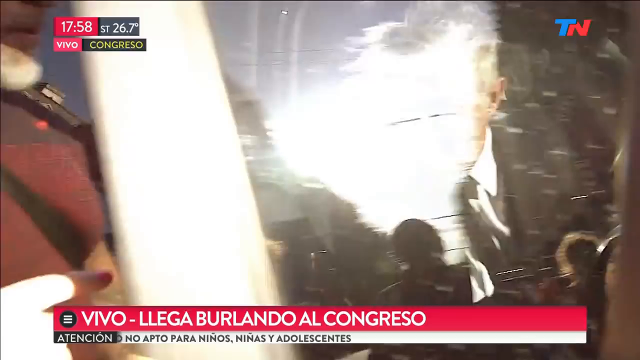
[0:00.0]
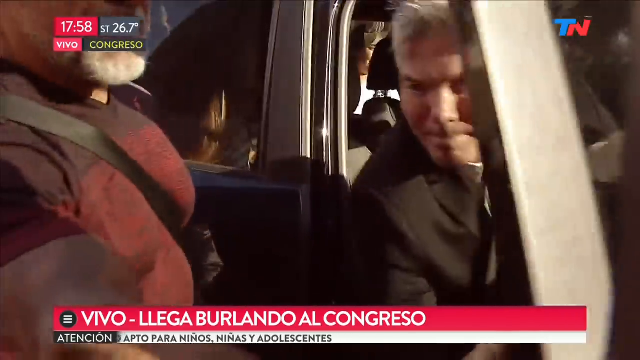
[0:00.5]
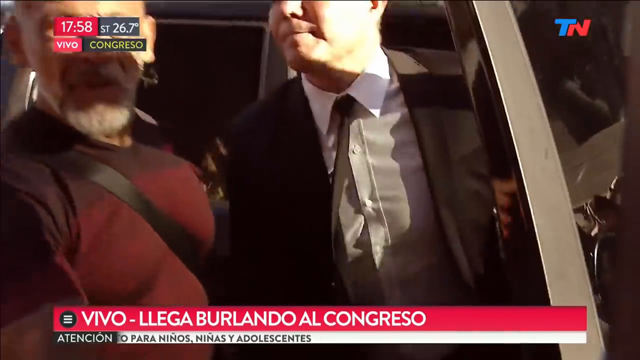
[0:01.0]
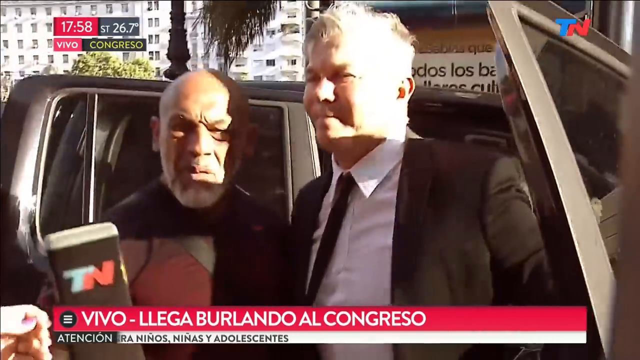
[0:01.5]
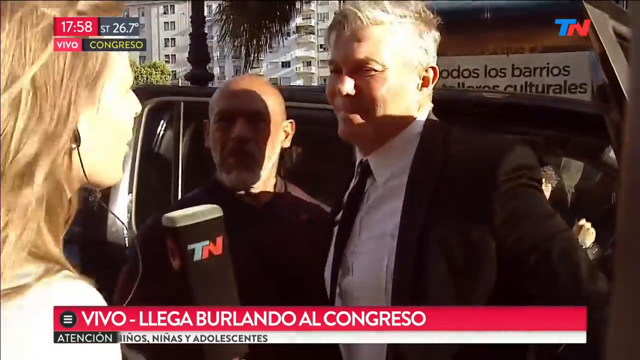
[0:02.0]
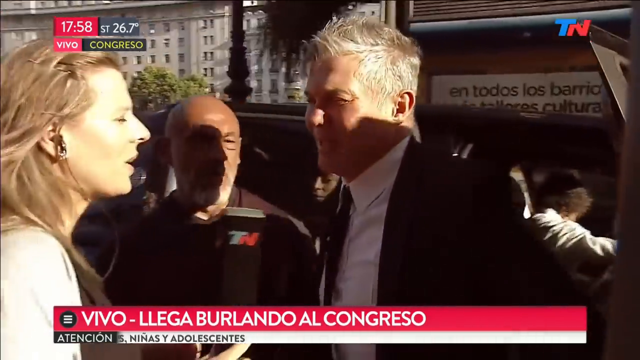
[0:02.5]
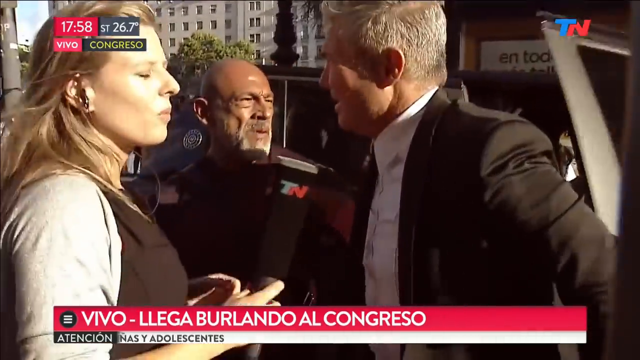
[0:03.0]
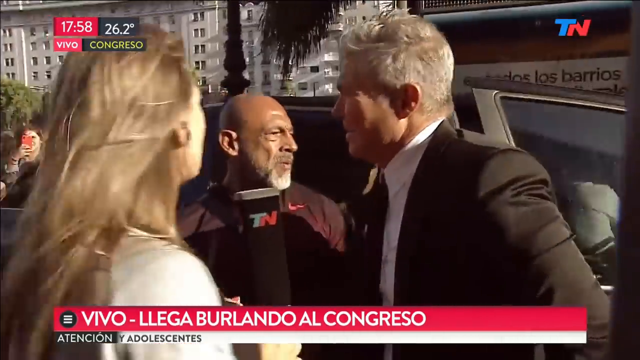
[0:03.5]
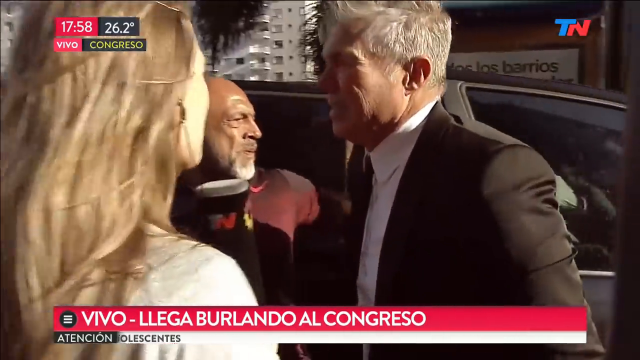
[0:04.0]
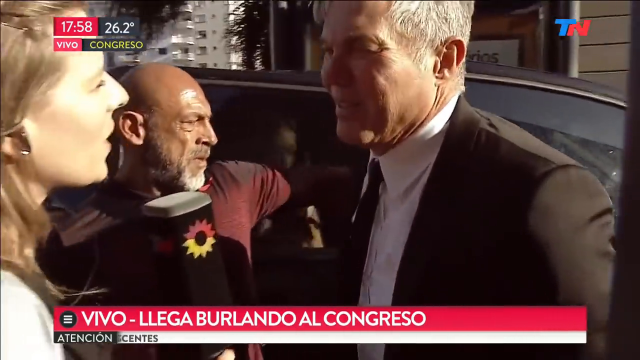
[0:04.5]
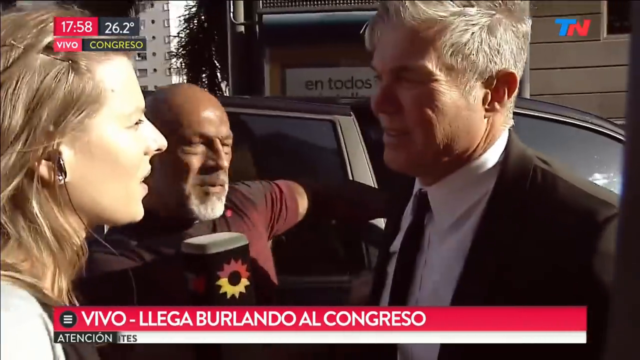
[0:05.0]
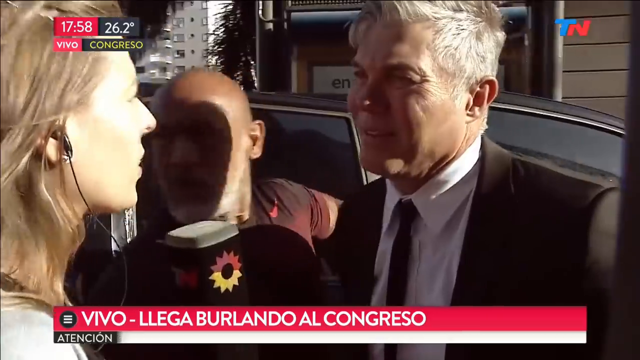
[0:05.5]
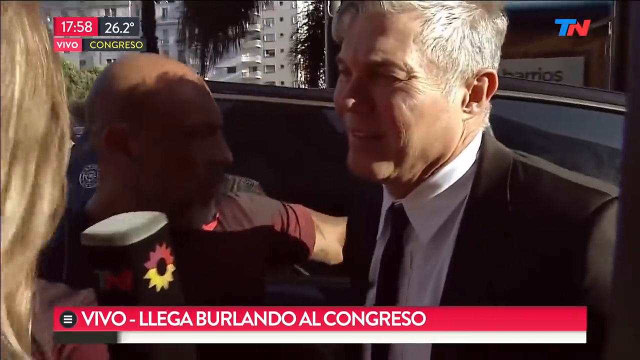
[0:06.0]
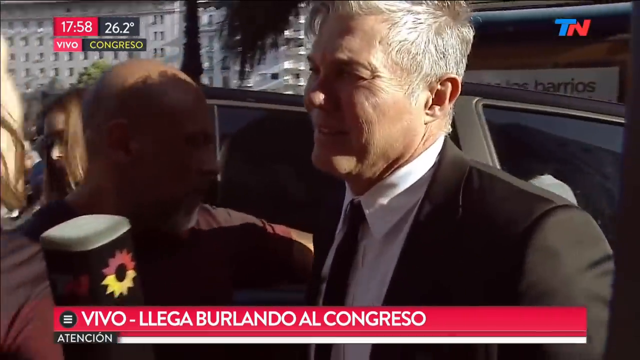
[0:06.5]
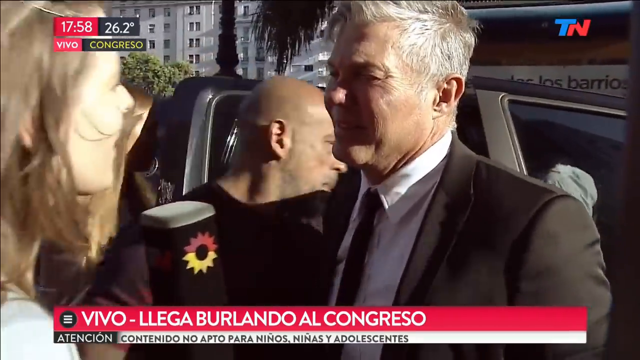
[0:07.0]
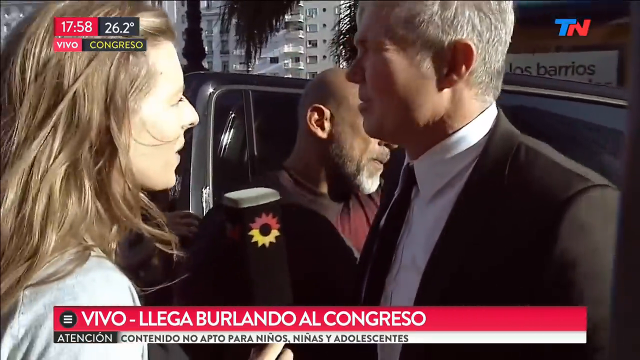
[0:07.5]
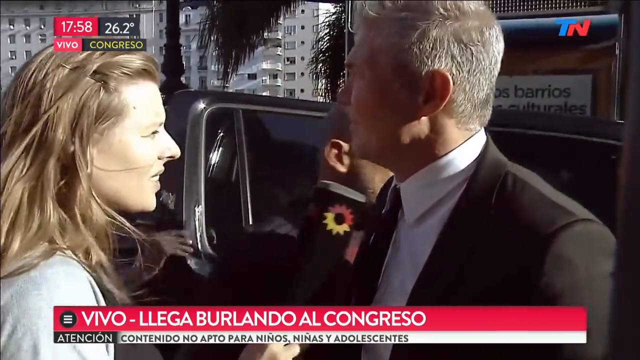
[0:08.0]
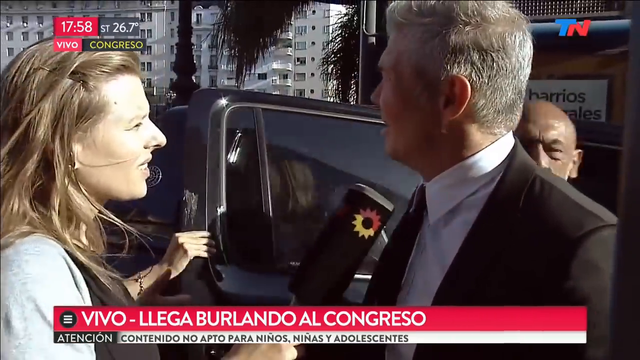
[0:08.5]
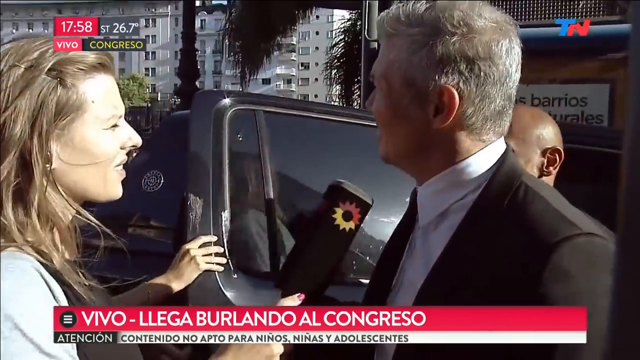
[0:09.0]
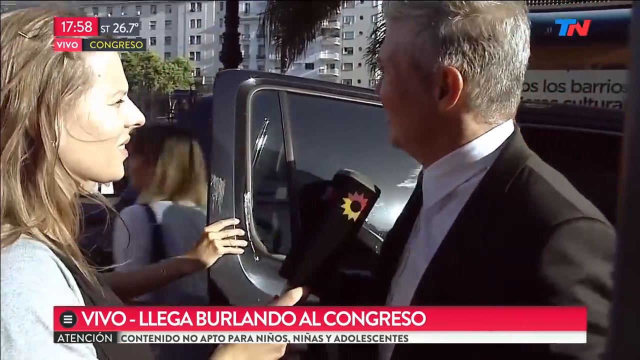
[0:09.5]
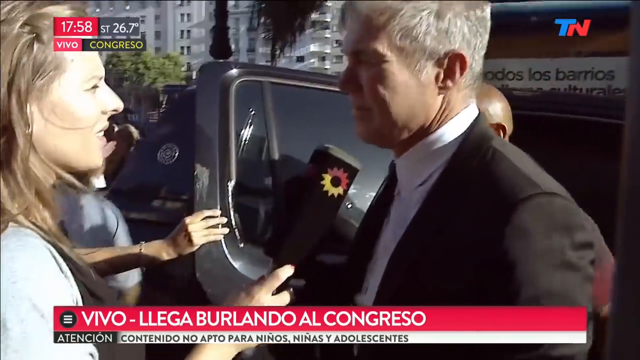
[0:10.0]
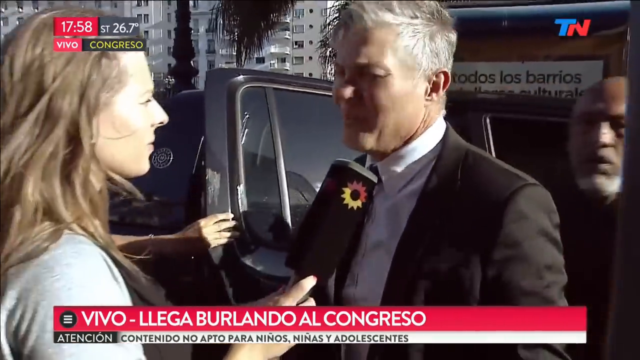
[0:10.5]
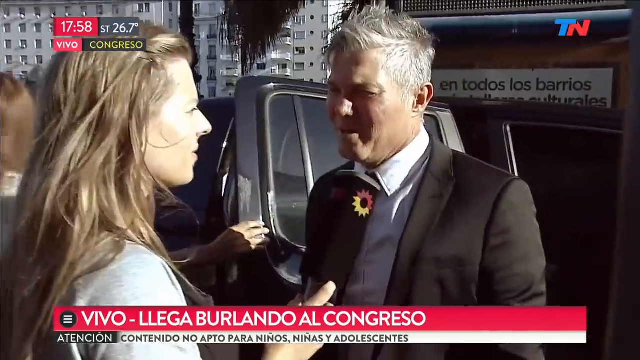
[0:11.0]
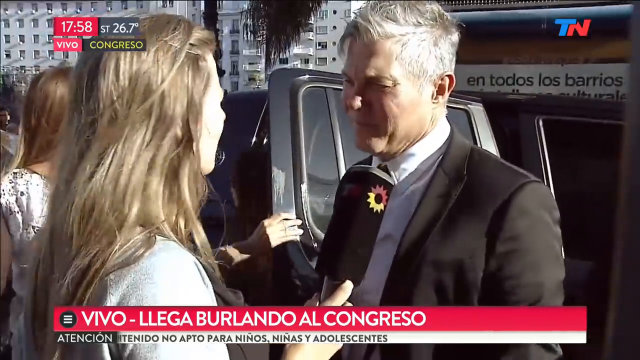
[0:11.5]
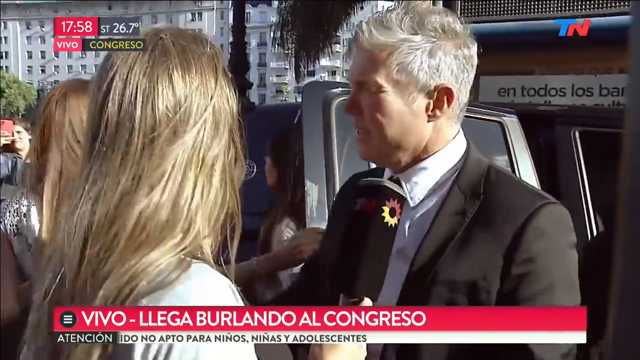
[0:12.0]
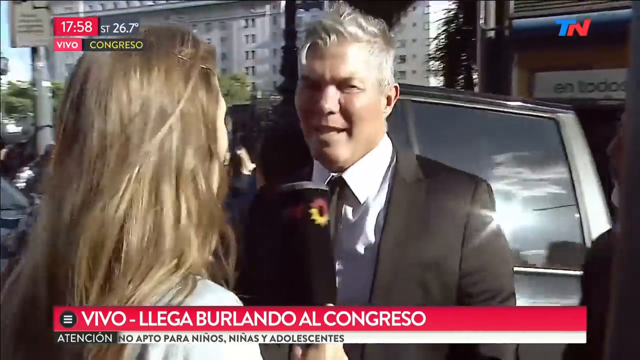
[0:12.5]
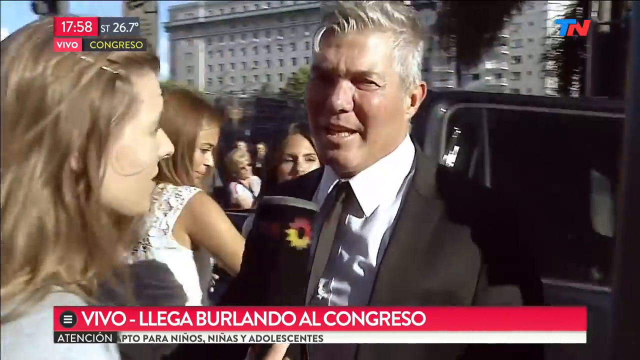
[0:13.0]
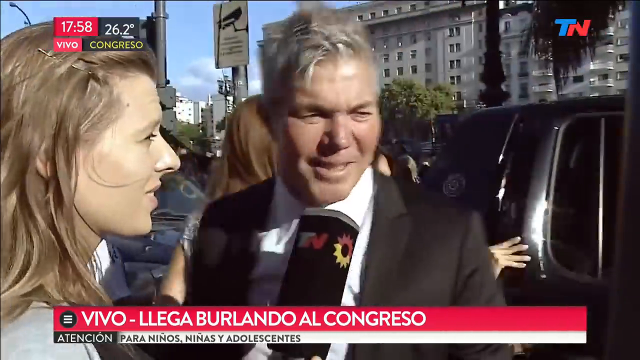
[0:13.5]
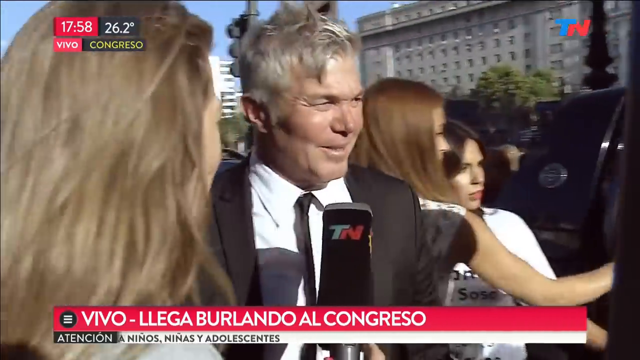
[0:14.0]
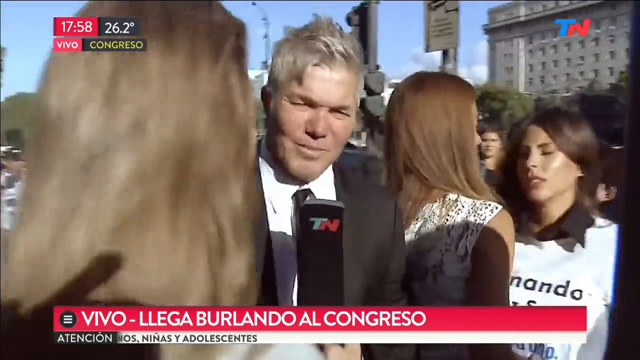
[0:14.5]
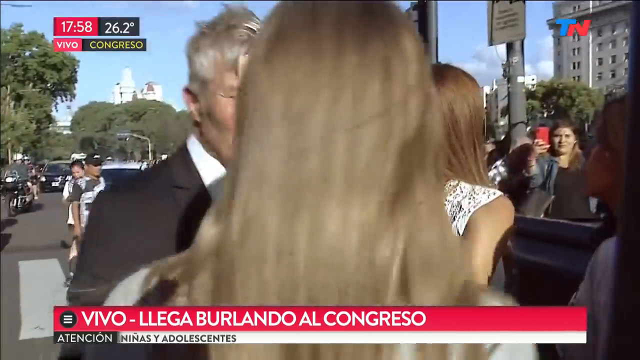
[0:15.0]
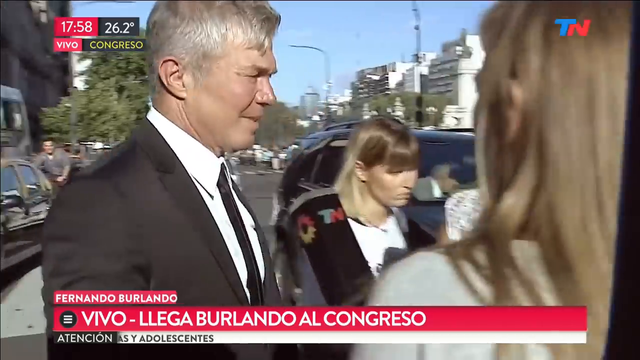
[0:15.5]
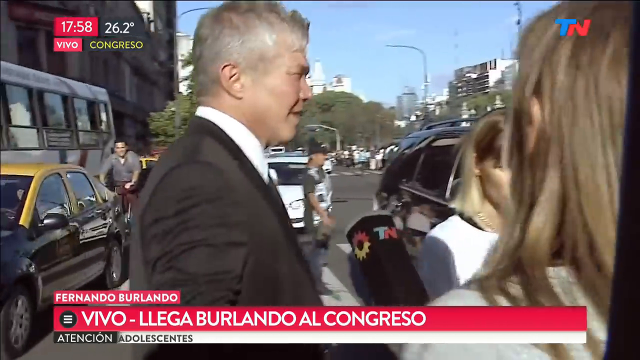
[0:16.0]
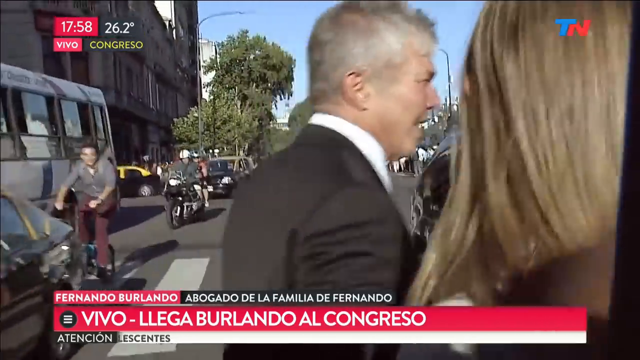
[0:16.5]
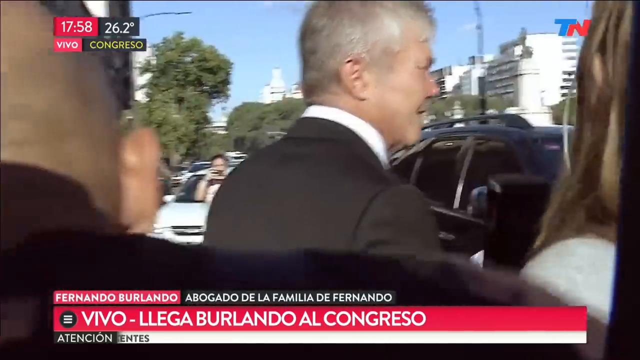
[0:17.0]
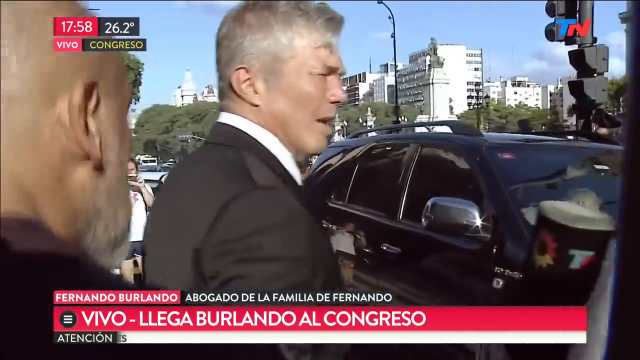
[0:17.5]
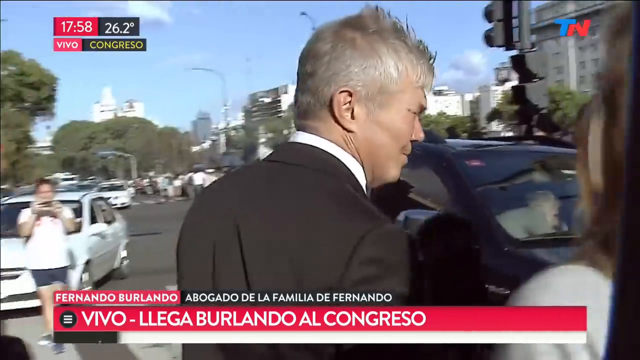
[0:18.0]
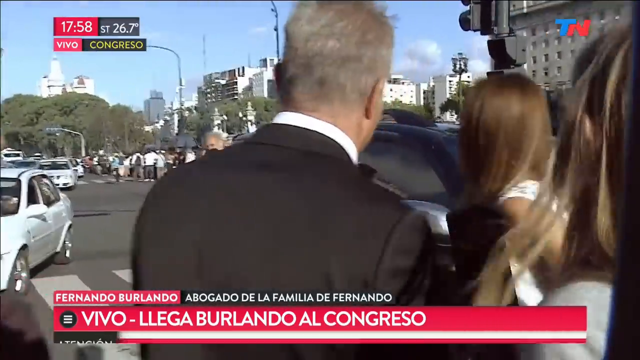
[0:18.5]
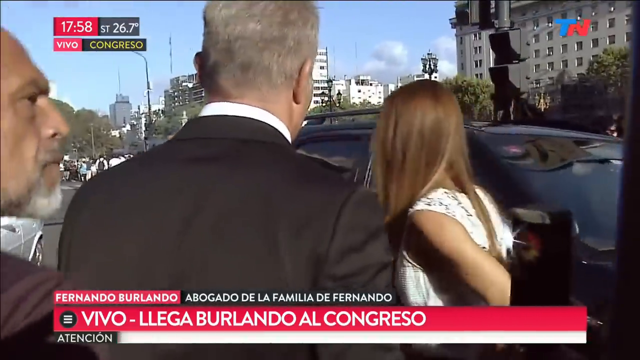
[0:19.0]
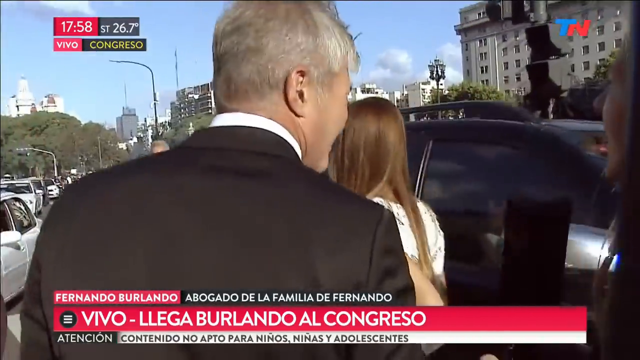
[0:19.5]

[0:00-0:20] News coverage shows a man in a black suit, a white shirt, and a black tie getting out of a vehicle and talking to a news anchor on the left side of the frame. Text at the bottom reads "VIVO - LLEGA BURLANDO AL CONGRESO". The news anchor holds a large microphone up to the man in the suit, who speaks into it and then walks away from her toward another black vehicle. The camera pans around from his face to his back, showing him from behind as he walks away from the camera; the news anchor follows behind him, and the camera follows her back. A couple of other people who got out of the vehicle with him accompany the man.